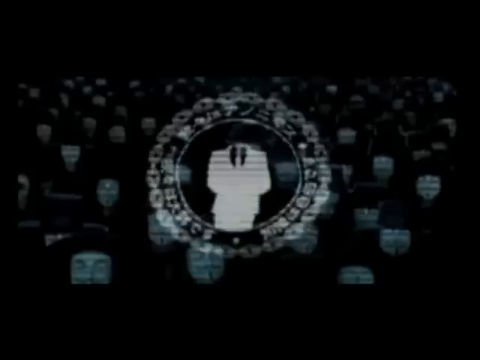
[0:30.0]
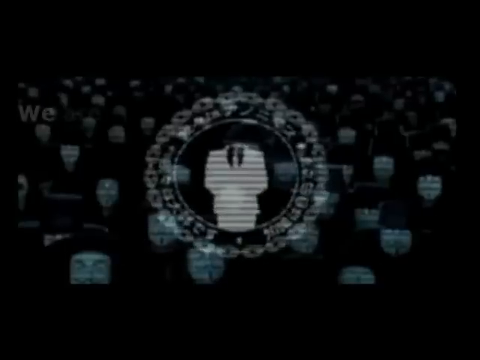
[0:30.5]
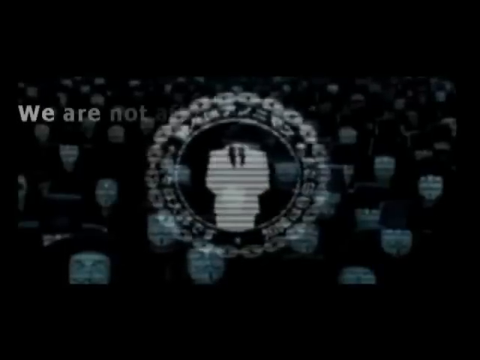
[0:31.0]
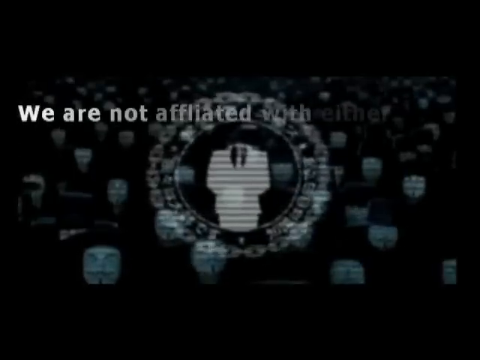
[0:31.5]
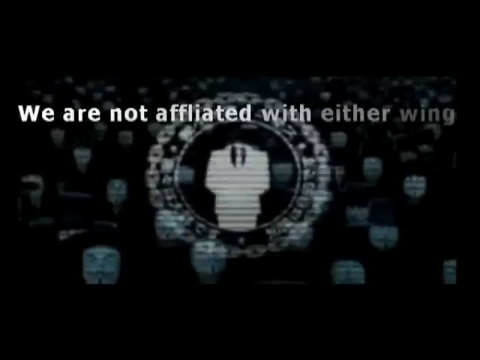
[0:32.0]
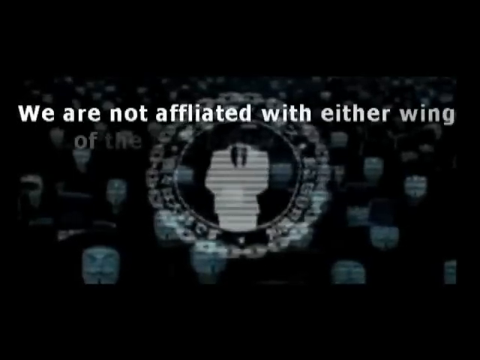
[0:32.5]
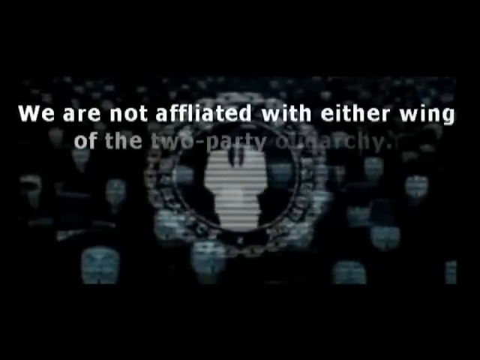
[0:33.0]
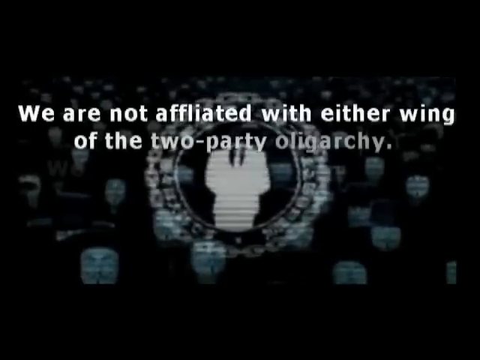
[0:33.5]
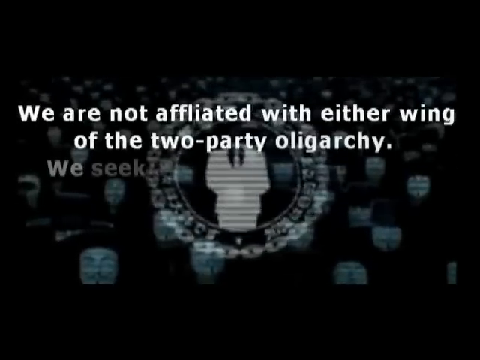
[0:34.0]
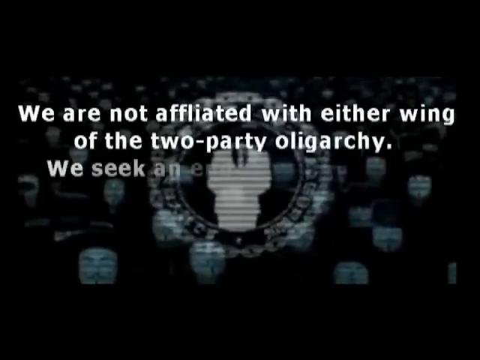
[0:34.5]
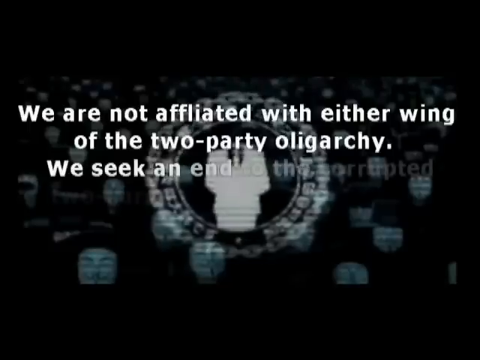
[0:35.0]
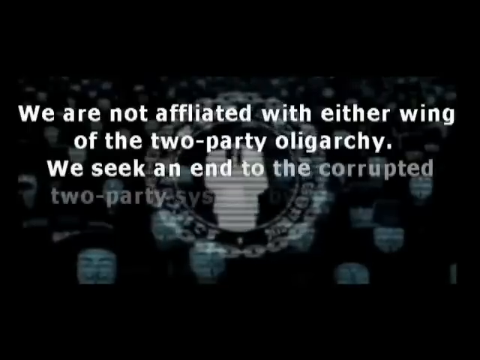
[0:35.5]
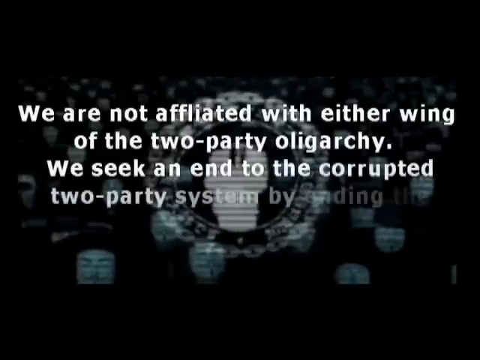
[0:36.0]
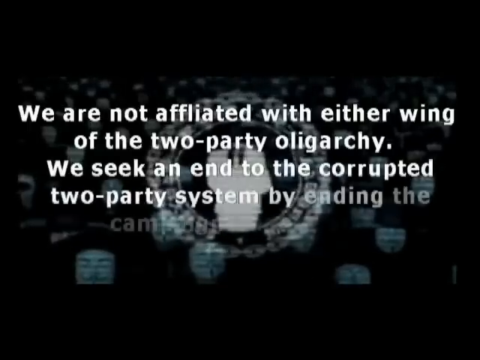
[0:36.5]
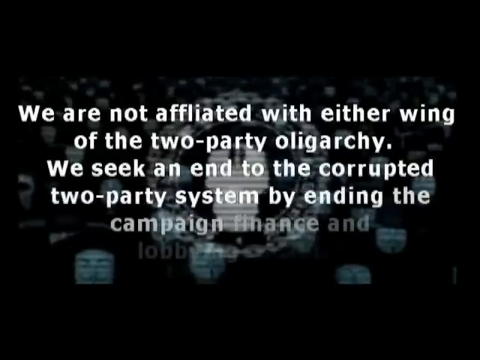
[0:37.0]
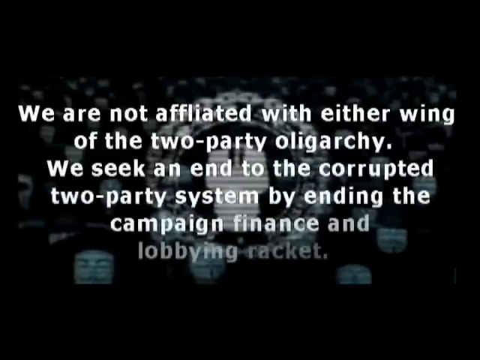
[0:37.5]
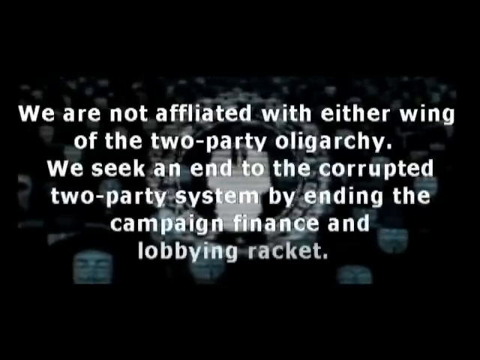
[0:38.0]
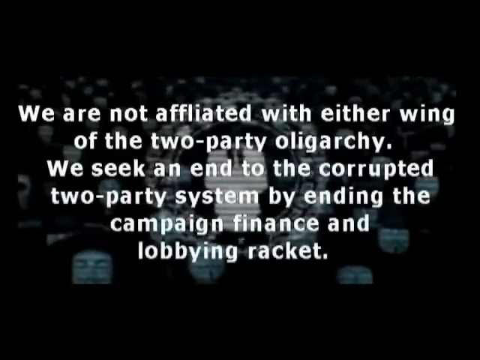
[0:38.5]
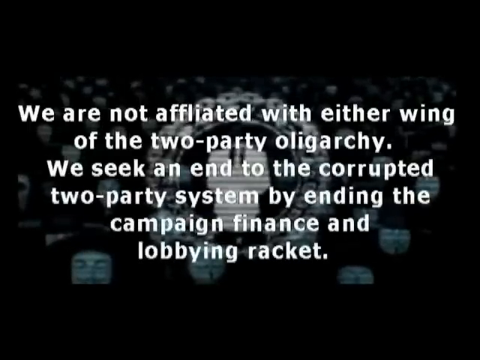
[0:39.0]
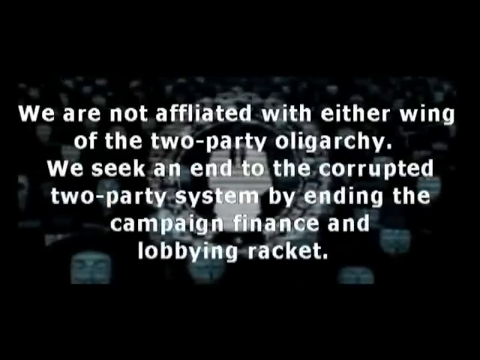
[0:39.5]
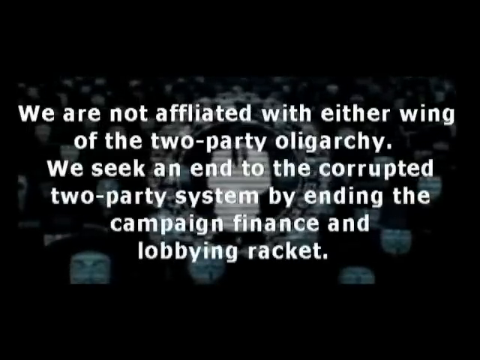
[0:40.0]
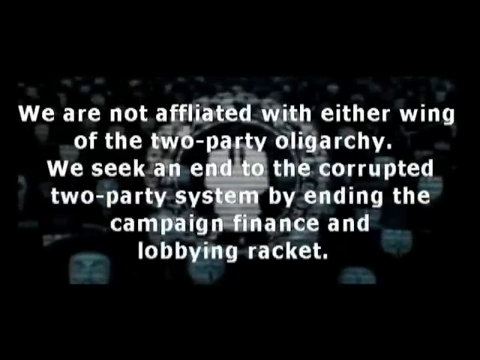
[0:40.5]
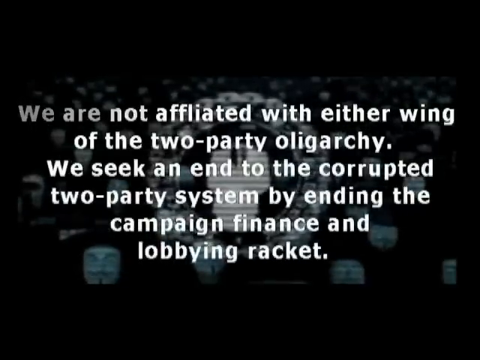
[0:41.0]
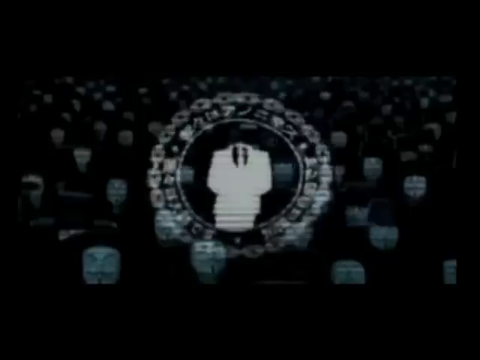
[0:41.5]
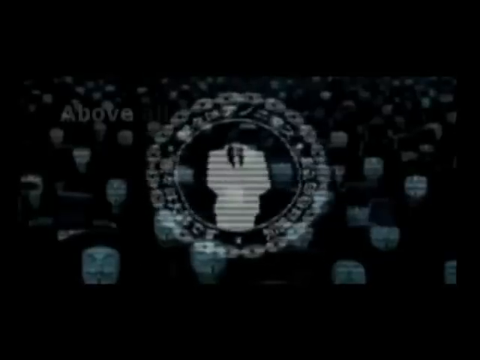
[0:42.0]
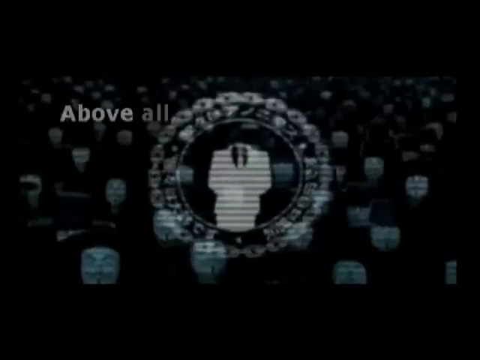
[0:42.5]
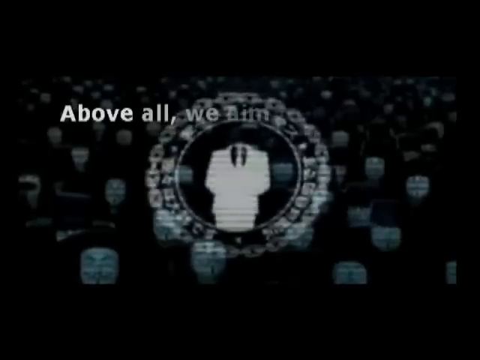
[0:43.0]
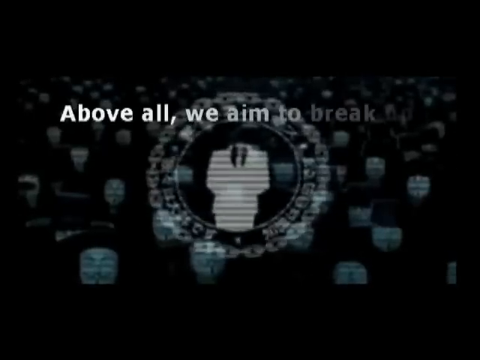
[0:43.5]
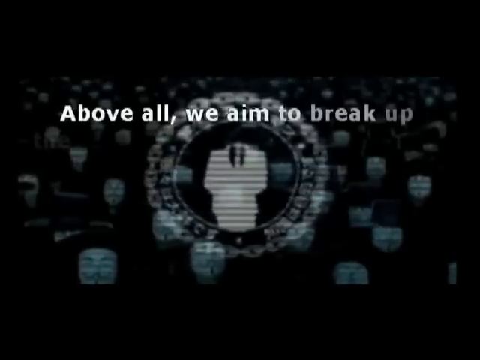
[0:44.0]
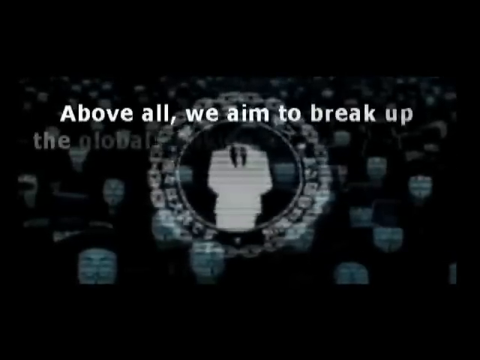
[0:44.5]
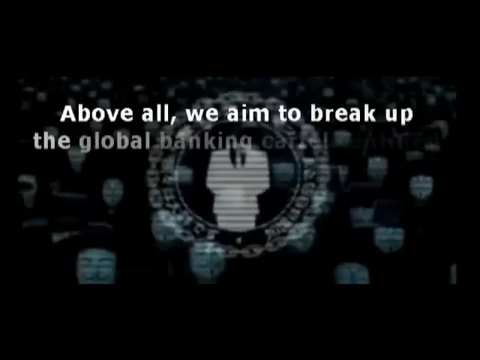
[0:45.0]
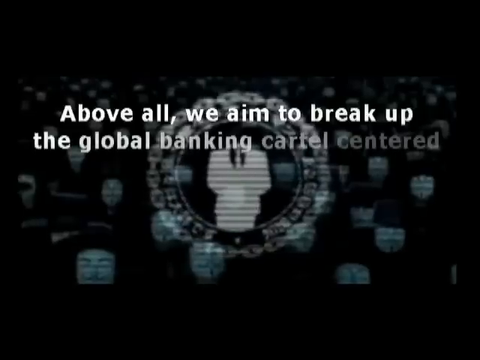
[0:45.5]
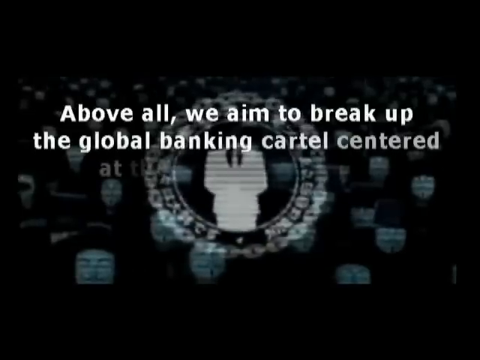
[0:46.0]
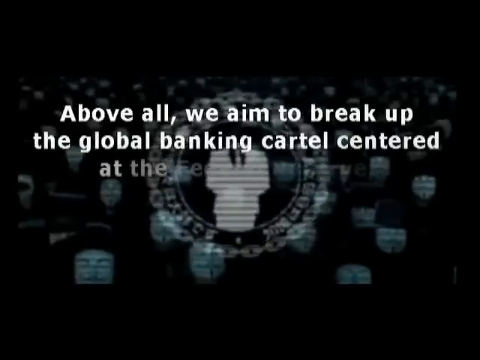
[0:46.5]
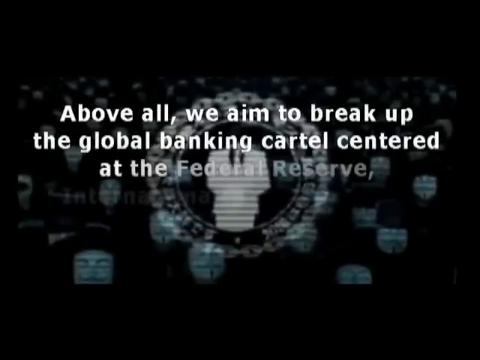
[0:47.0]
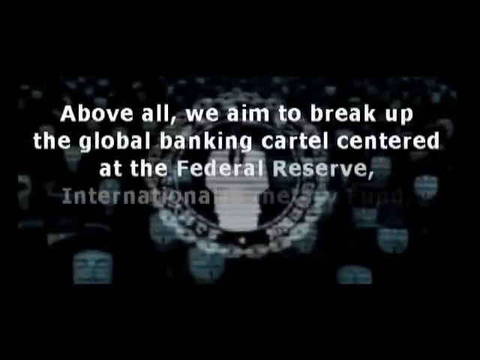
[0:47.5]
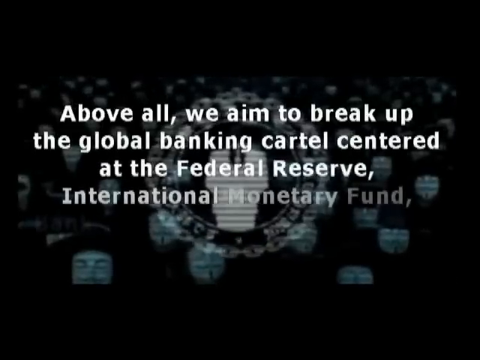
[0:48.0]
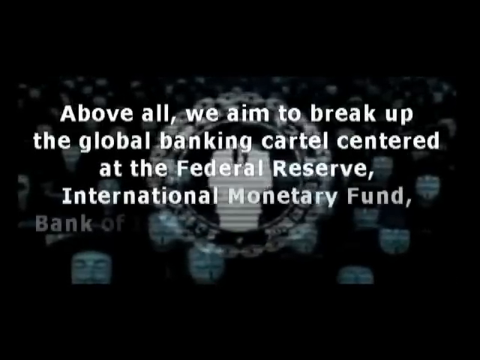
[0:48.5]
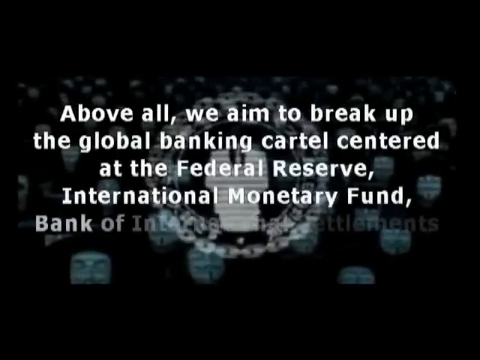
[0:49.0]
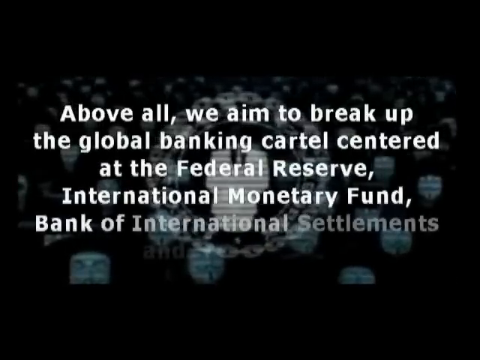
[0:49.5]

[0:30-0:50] A black background shows many figures wearing white masks and a circular logo with something inside it that looks like a person wearing a white suit. In front, white text slowly appears, reading: "We are not affiliated with either wing of the two-party oligarchy. We seek an end to the corrupted two-party system by ending the company finance and lobbying racket". This text disappears and another block appears in its place: "Above all, we aim to break up the global banking cartel centered in the Federal Reserve, International Monetary Fund, Bank of International Settlements...", which stops short in the middle of the sentence before it fully appears. The text appears slowly, word after word, and once fully shown it remains on screen for a few seconds so it can be easily read. With the slight zooming in, the video seems to be glitching.